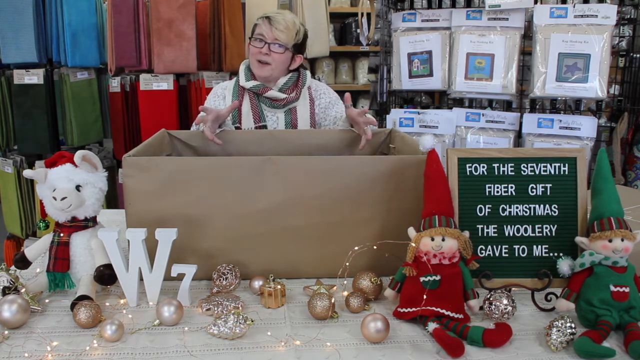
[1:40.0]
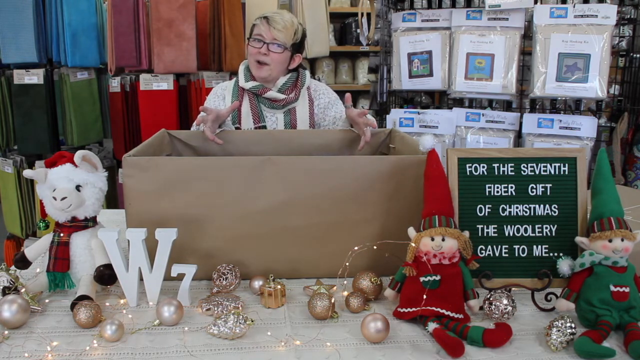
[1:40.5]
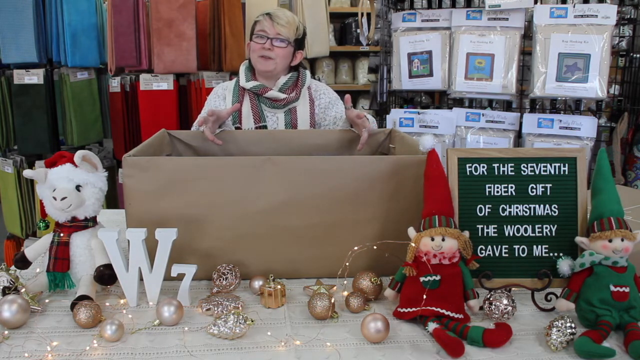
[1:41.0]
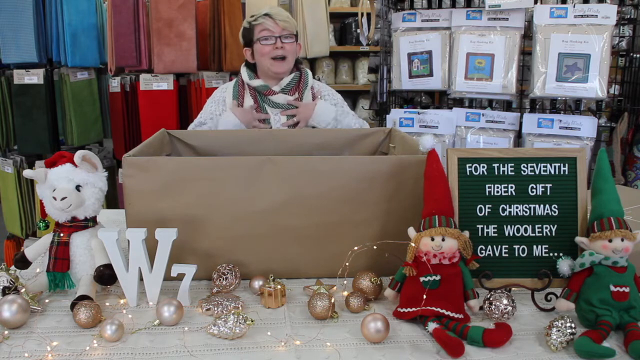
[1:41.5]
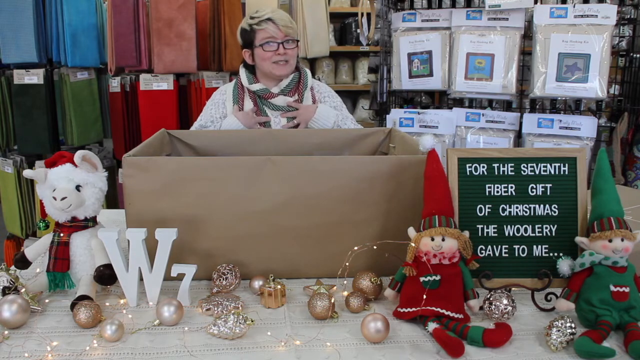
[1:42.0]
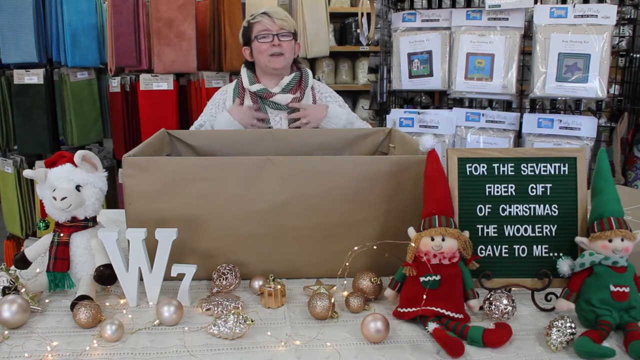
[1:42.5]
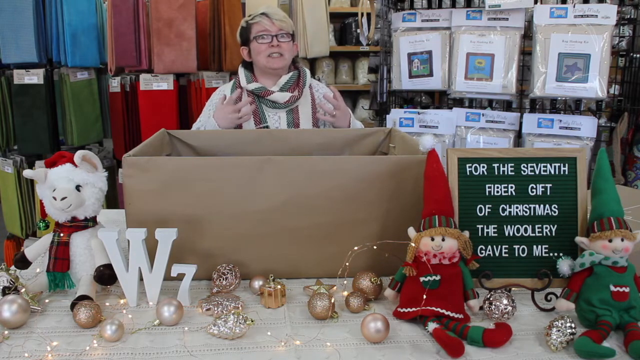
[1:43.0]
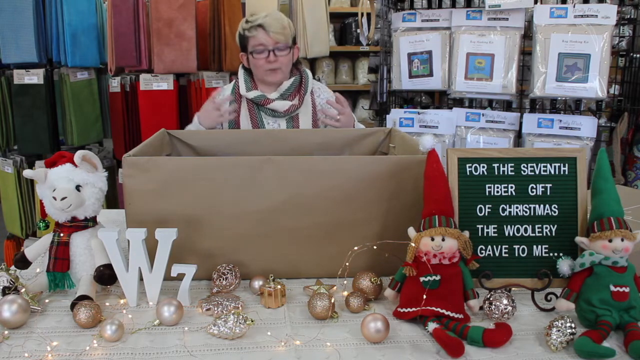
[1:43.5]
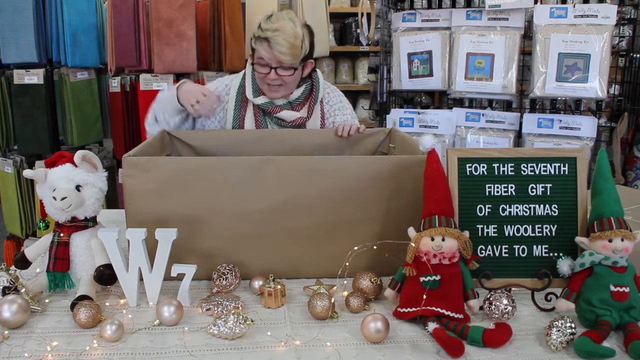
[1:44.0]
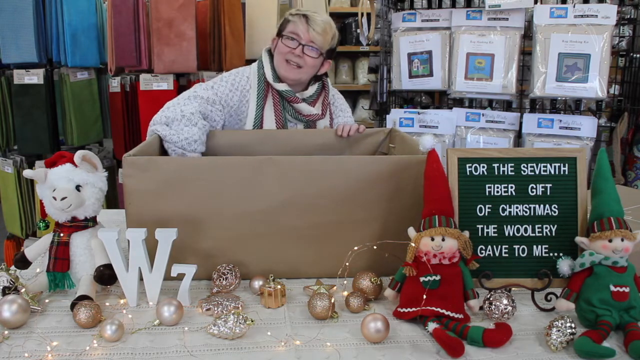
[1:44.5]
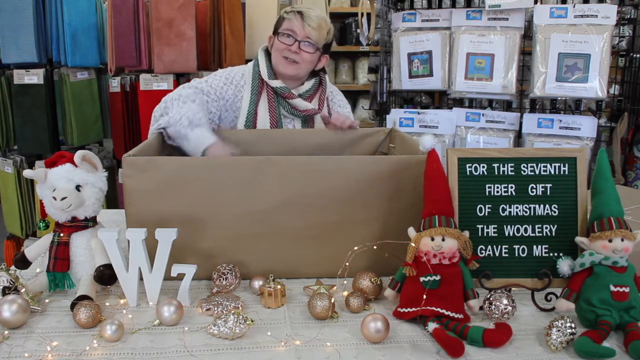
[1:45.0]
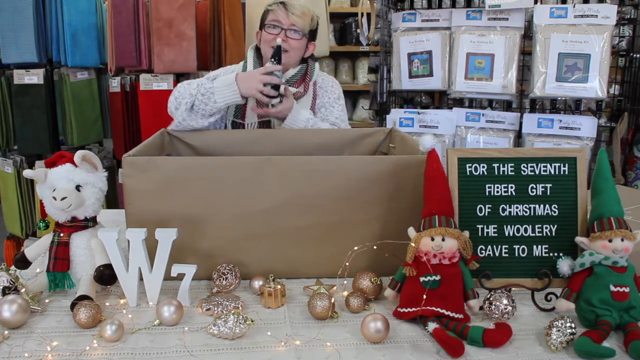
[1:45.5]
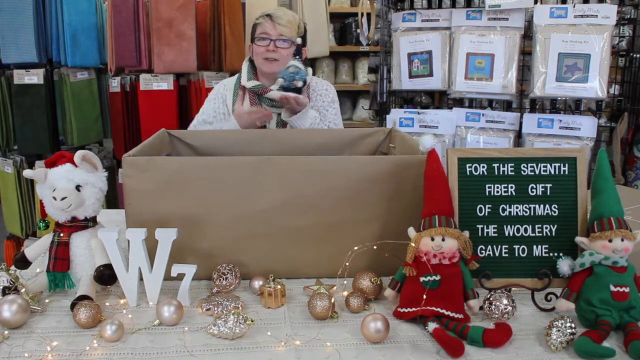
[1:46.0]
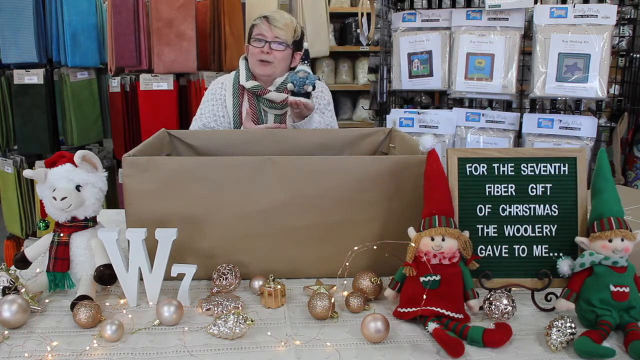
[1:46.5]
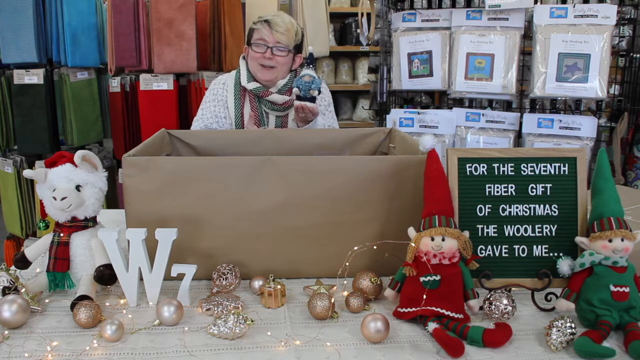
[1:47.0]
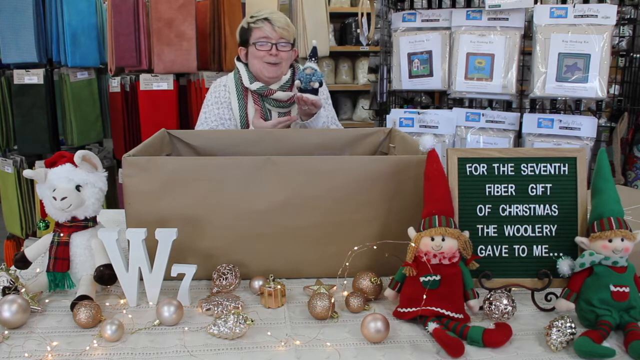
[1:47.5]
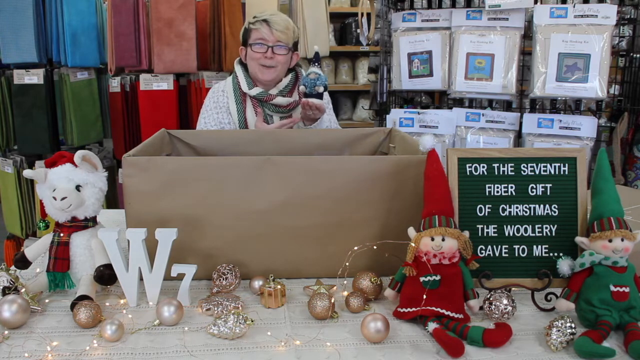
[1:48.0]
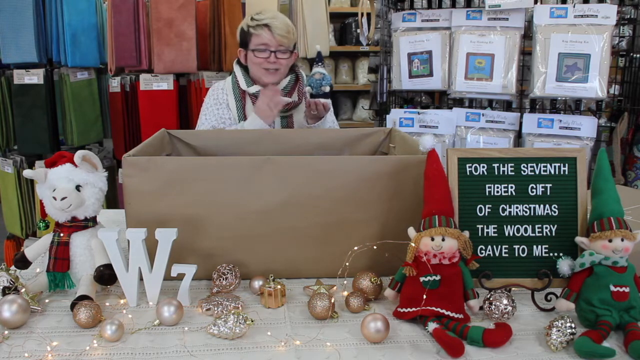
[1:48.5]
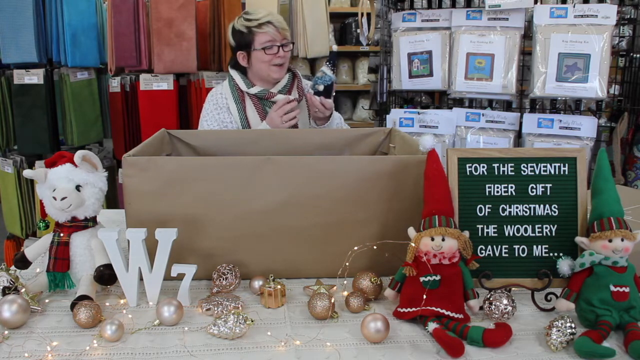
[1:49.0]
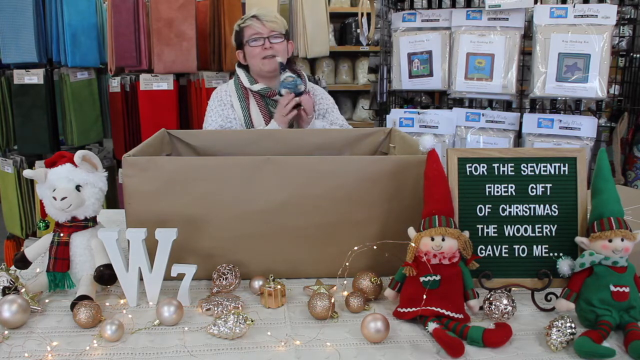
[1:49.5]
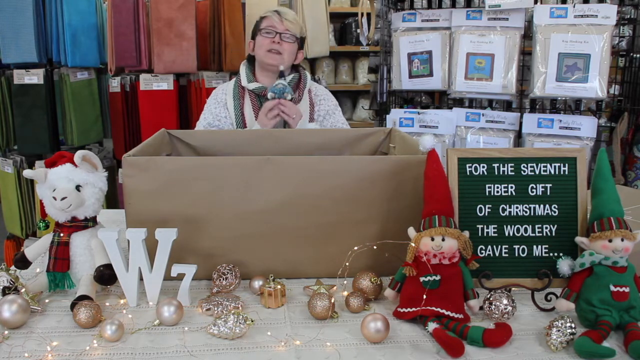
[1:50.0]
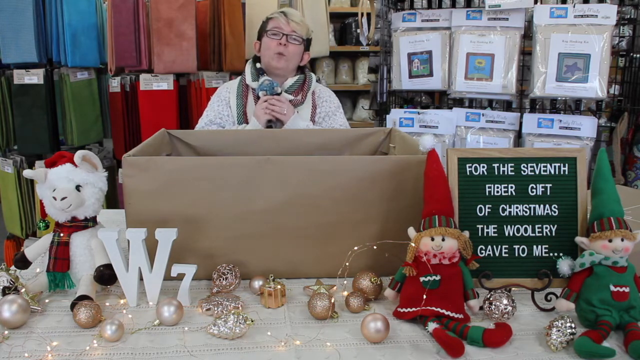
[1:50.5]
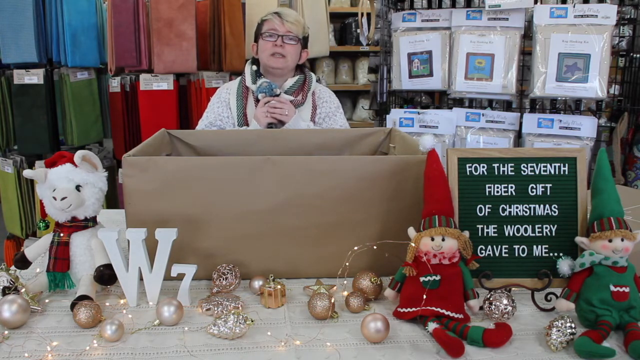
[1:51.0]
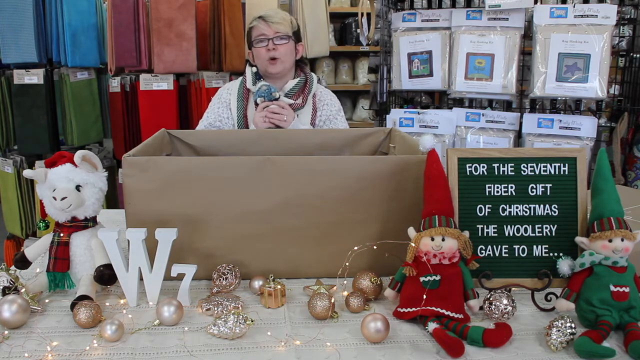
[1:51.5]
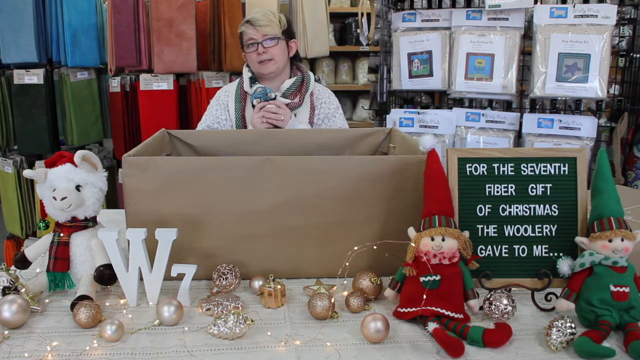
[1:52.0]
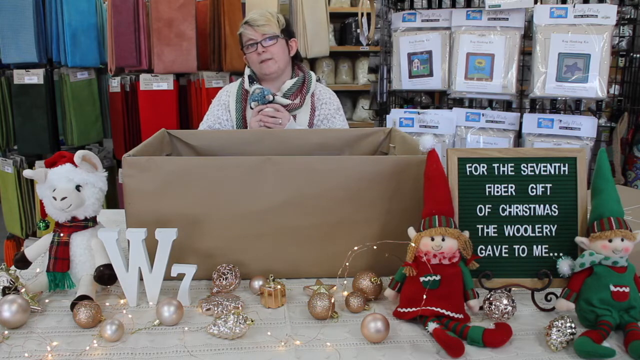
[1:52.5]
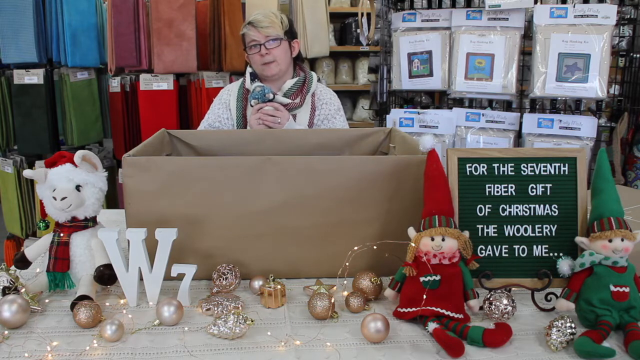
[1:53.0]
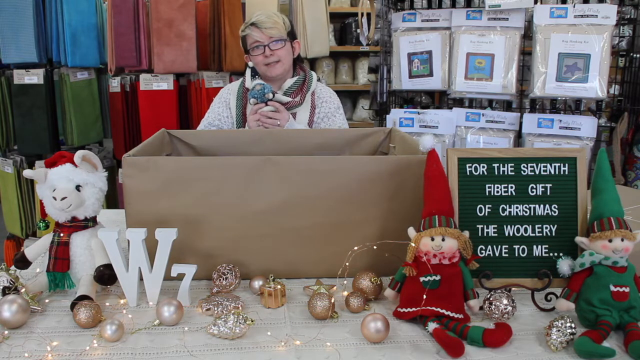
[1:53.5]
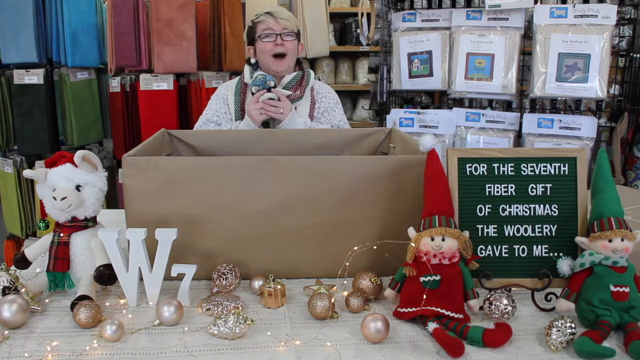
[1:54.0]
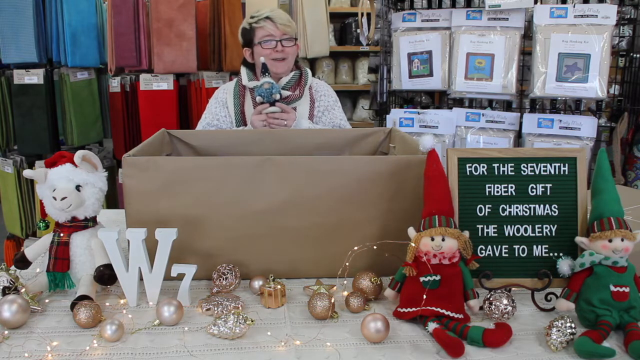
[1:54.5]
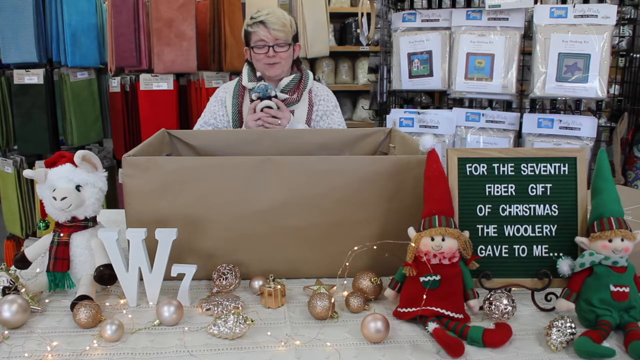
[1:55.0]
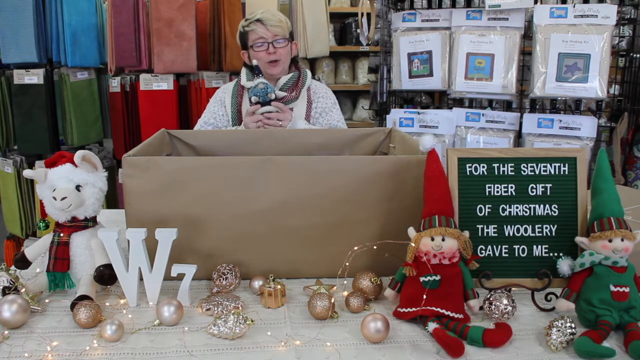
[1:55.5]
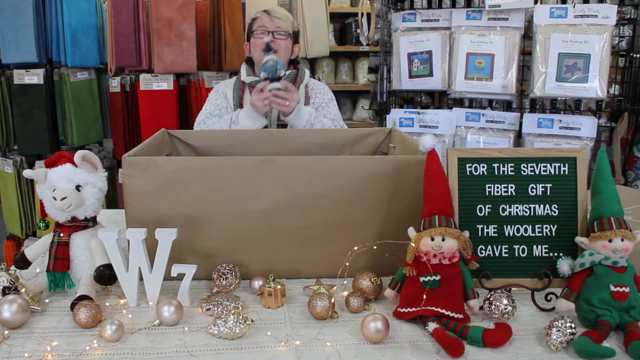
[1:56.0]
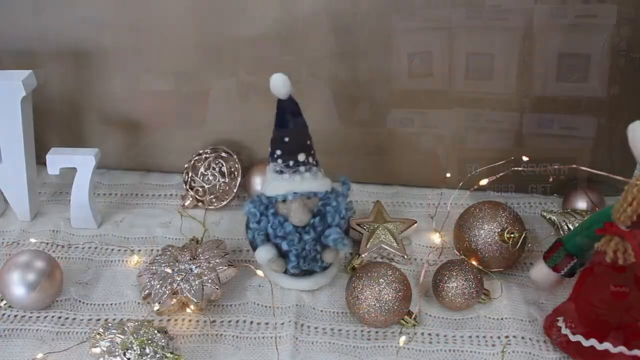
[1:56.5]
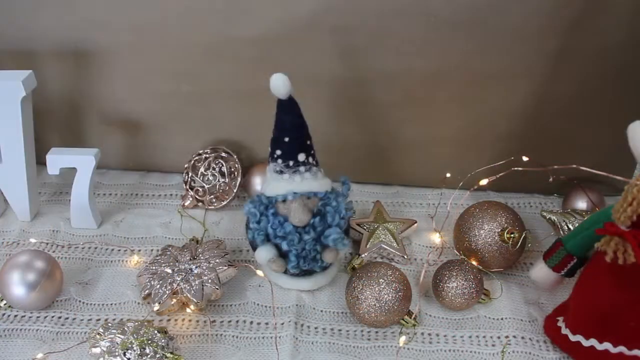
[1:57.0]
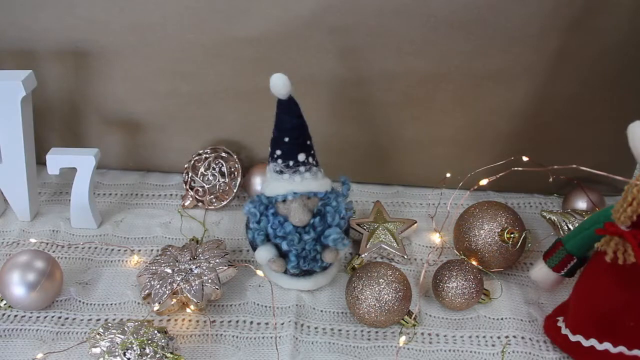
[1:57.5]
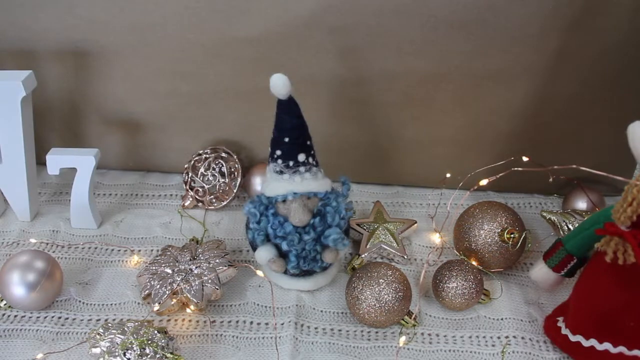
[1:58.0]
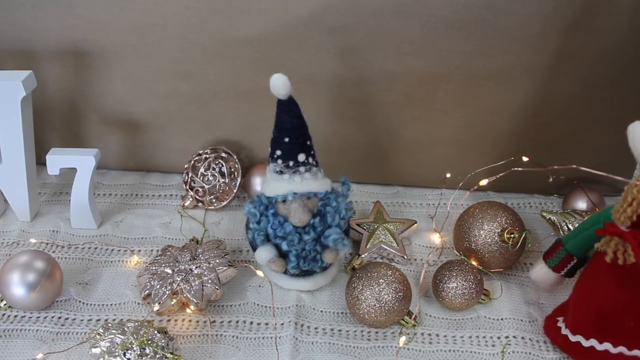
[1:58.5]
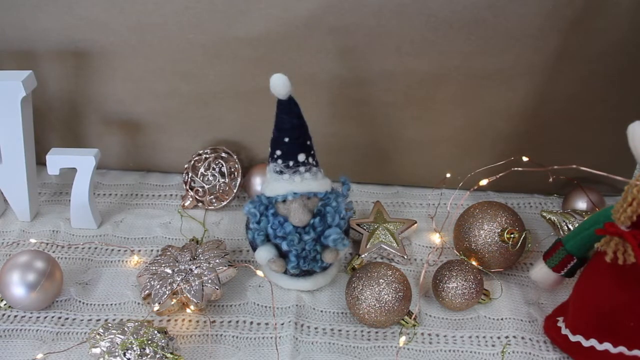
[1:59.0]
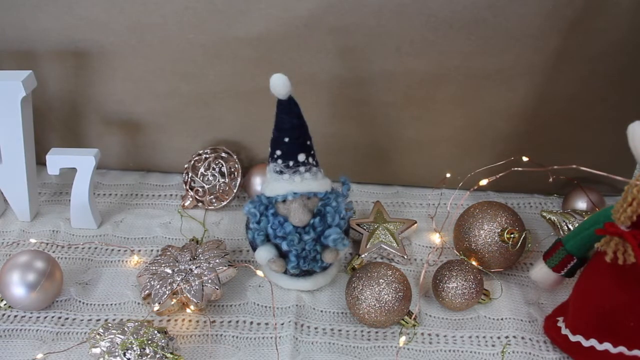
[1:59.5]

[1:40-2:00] A person stands behind a large brown box, wearing a white sweater and a scarf with green, red and white stripes. The person has short brown hair with blonde highlights and wears glasses. To the right of the box is a signboard with the message "For the seventh fiber gift of Christmas, the Woolery gave to me," with a plush stuffed elf toy on either side of it. In front of the box, a W and a 7 stand on the table, and to the left of the box is a white stuffed animal wearing a red hat and a red plaid scarf with green fringes. The person continues to speak, animatedly moving their hands, then reaches into the box and pulls out a figurine of an elf with a pointy hat. They hold the figurine with both hands and continue talking to the camera as they show it off. The camera cuts to a close-up of the elf figure sitting on a table, then cuts back to the person standing behind the box.